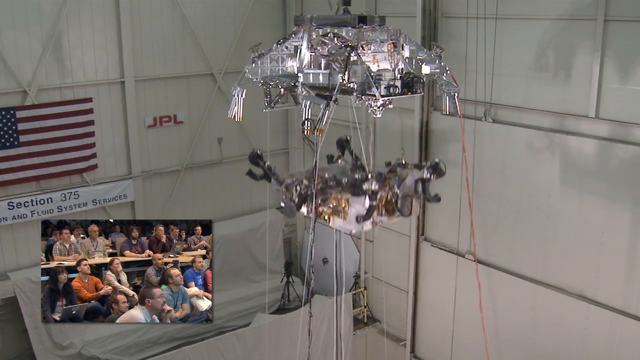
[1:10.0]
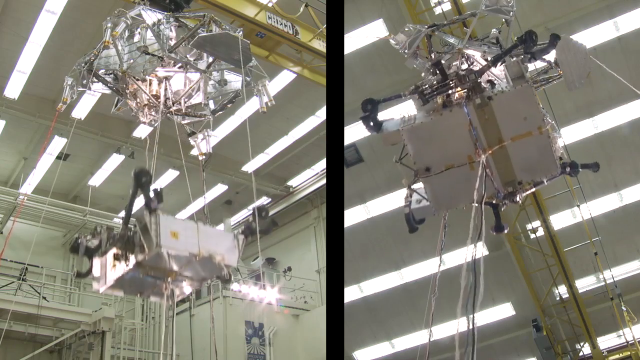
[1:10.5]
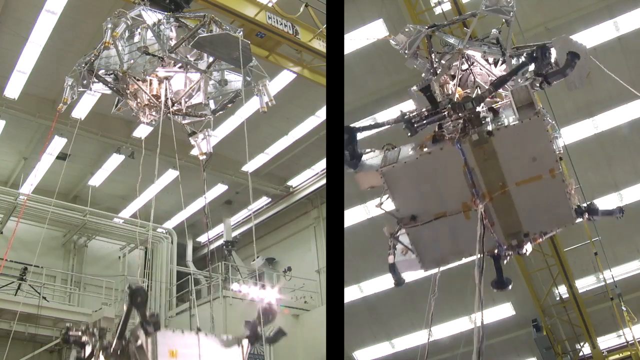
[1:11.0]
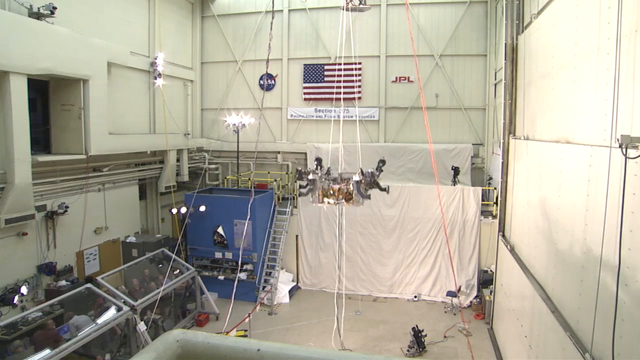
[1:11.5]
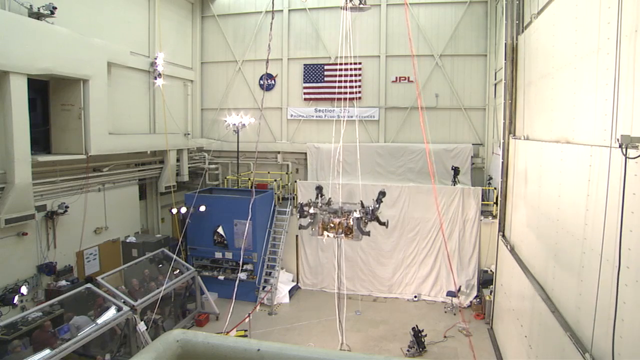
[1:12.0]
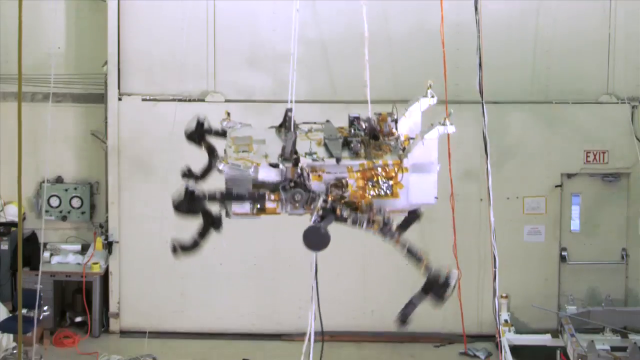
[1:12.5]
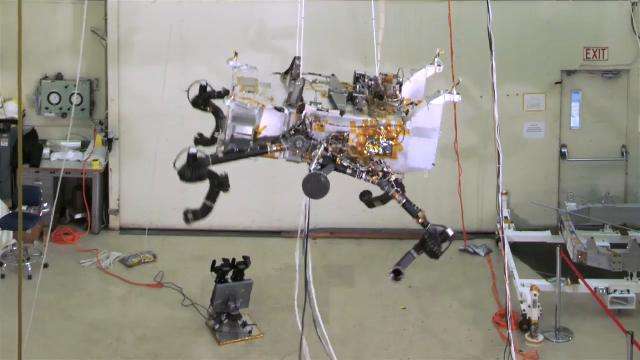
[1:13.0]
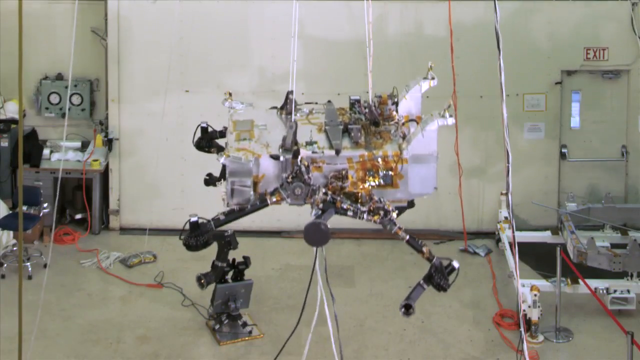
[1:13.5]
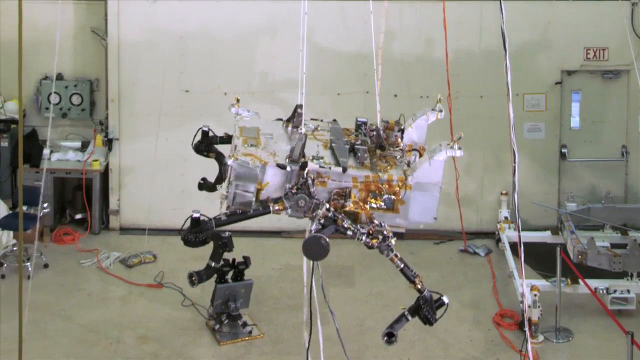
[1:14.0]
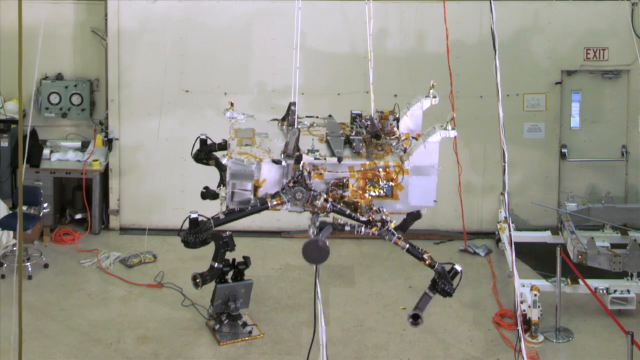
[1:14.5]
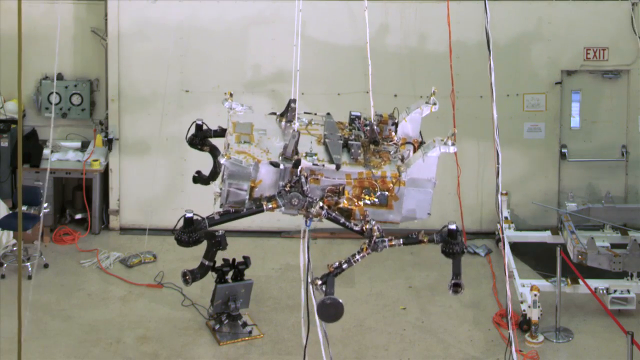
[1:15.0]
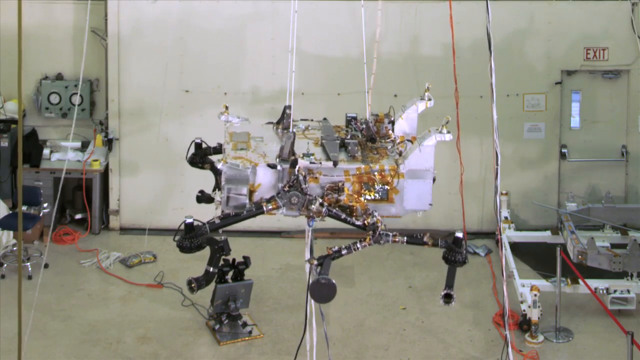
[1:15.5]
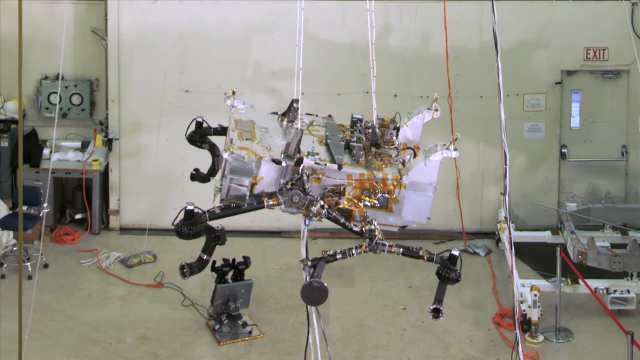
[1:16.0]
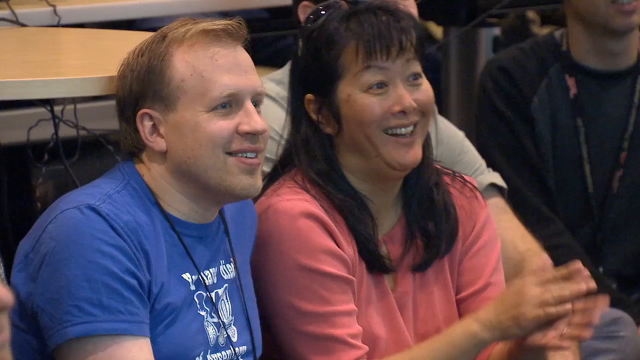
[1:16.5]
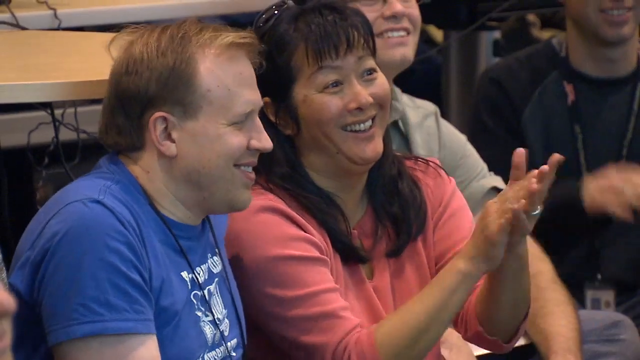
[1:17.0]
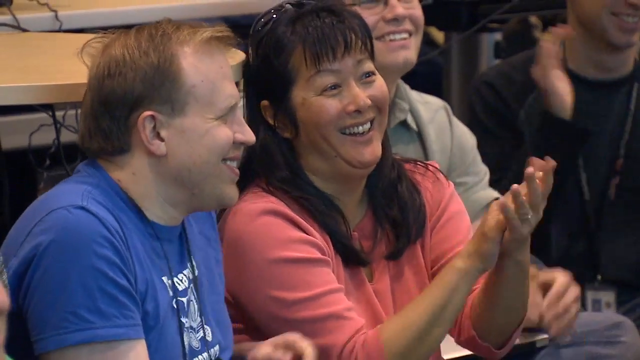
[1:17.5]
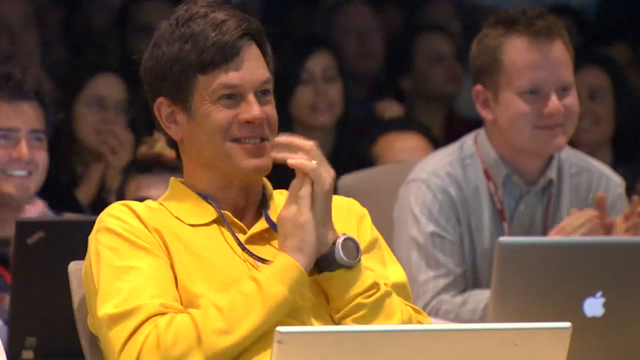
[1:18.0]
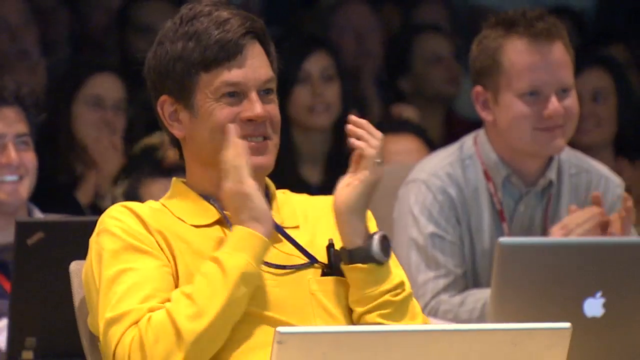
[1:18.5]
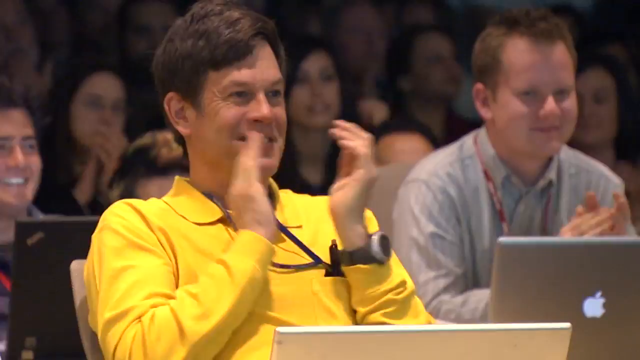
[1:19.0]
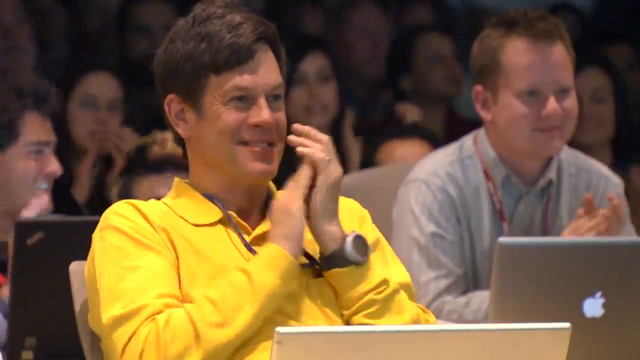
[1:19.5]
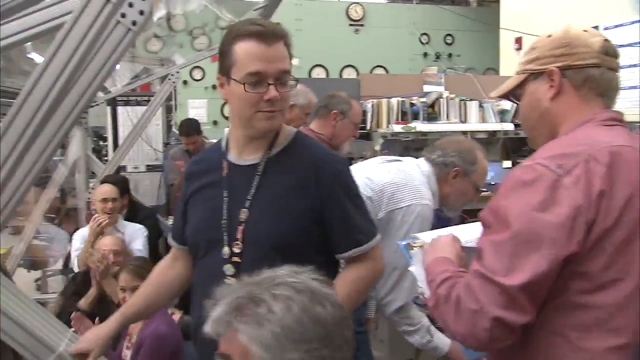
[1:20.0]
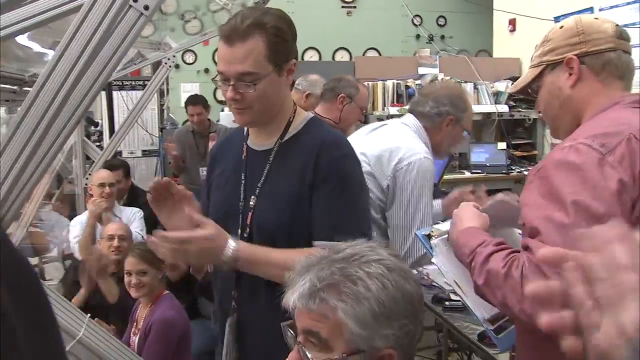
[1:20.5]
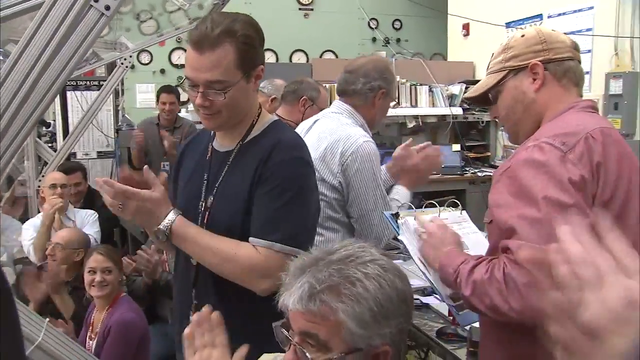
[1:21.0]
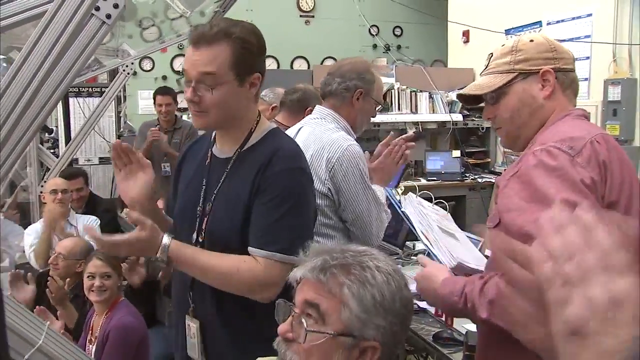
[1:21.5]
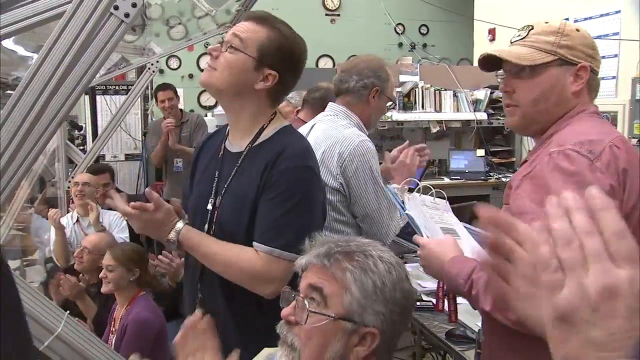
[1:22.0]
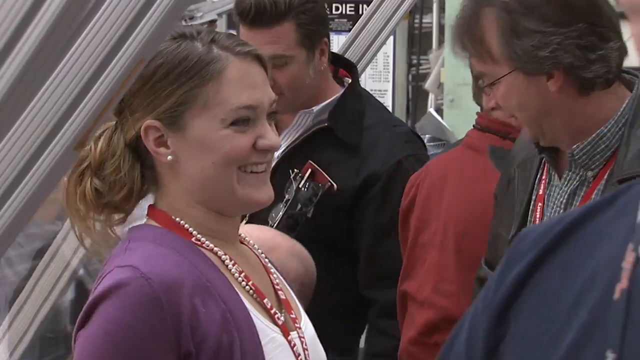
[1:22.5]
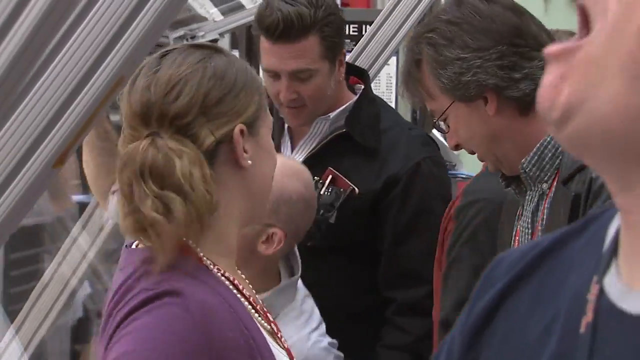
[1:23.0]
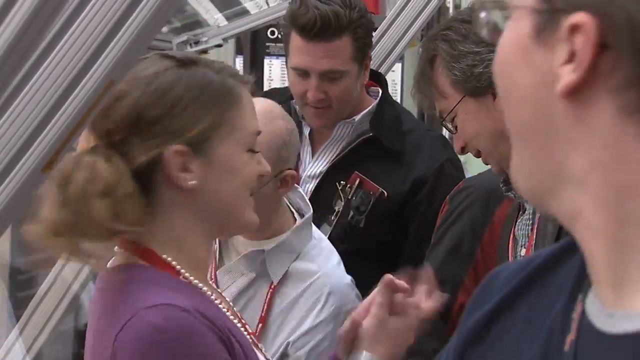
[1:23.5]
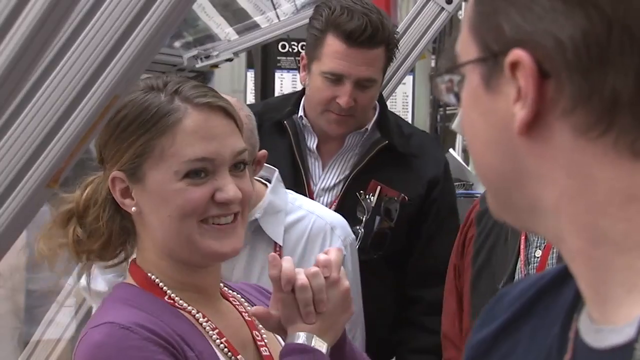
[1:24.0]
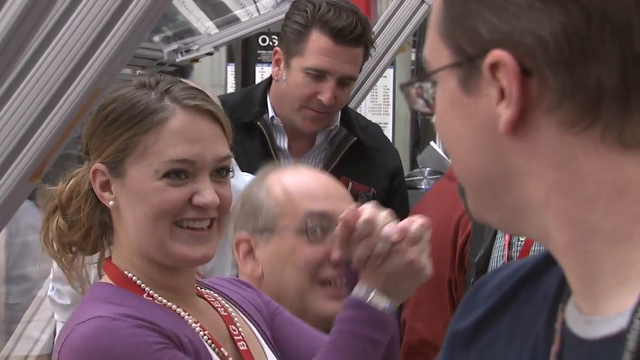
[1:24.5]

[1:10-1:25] A rover falls toward the ground in a room, detaching from a top part. It looks like an early stage of the rover's construction and does not look completely finished, and strings are visible holding it together. As it falls, a group of casually dressed men and women in the room clap, cheer and smile. Some of them have computers and hold binders, and they are packed closely together, conversing.